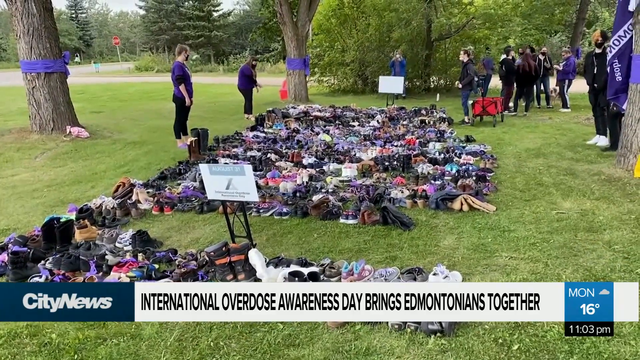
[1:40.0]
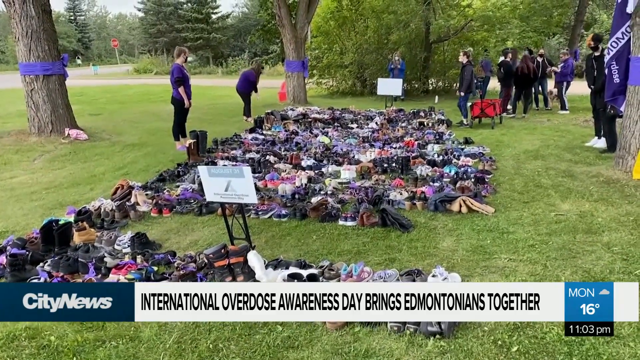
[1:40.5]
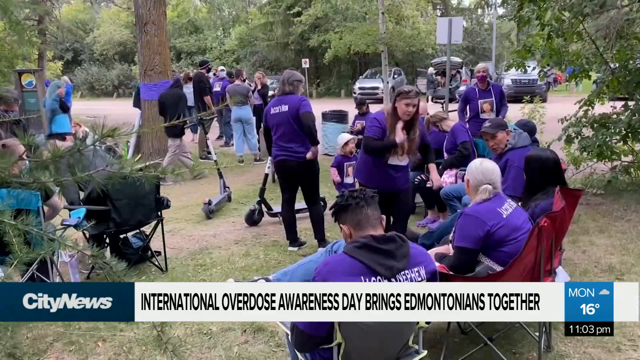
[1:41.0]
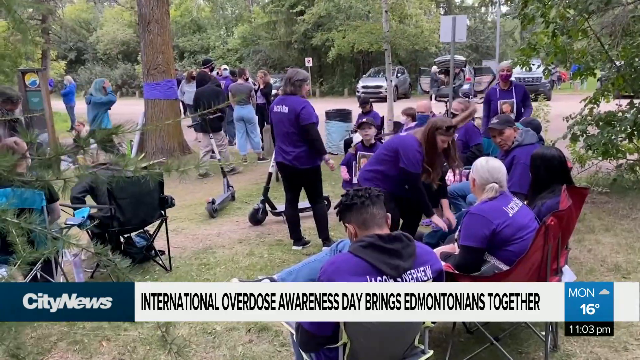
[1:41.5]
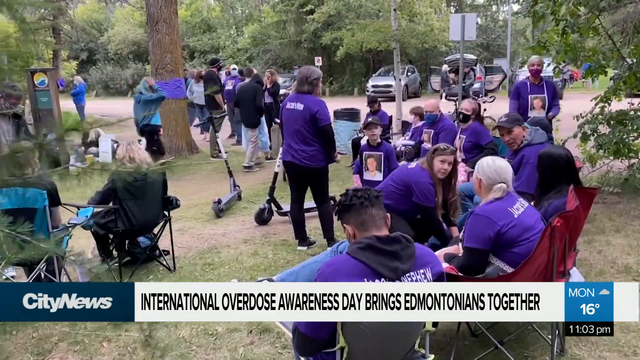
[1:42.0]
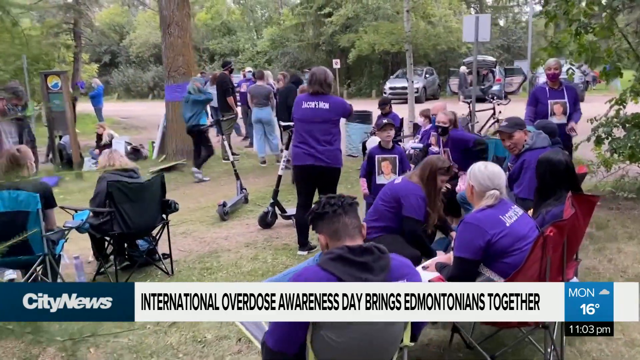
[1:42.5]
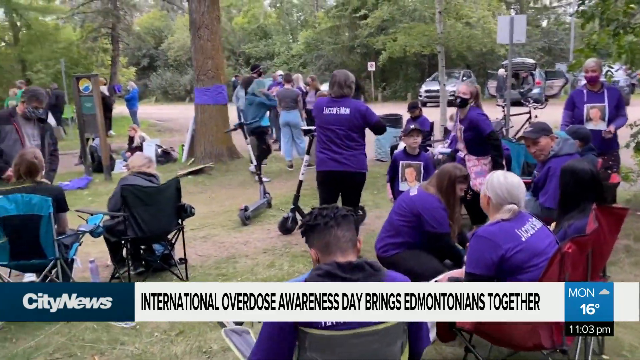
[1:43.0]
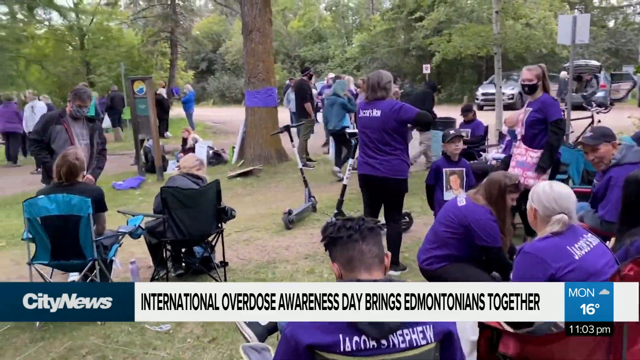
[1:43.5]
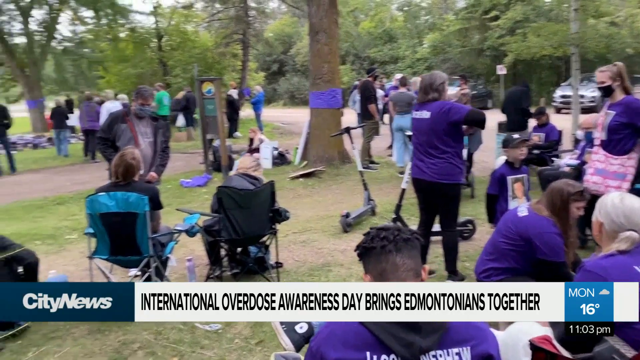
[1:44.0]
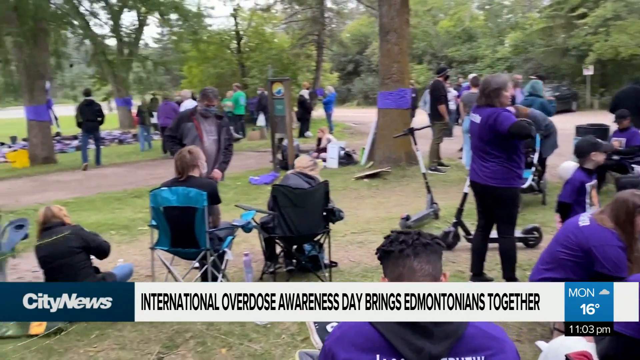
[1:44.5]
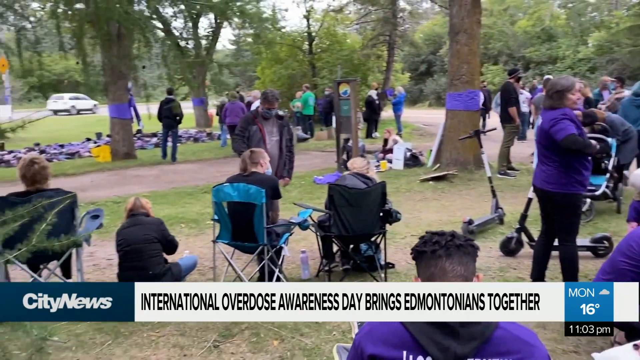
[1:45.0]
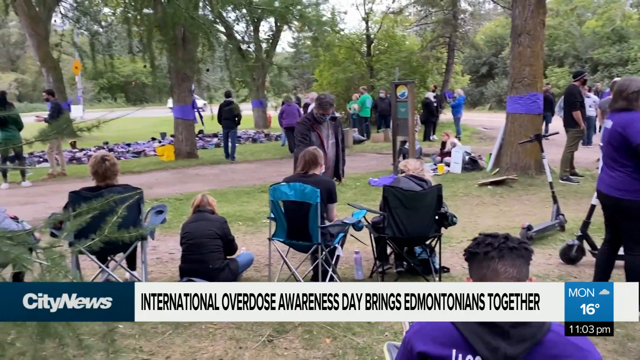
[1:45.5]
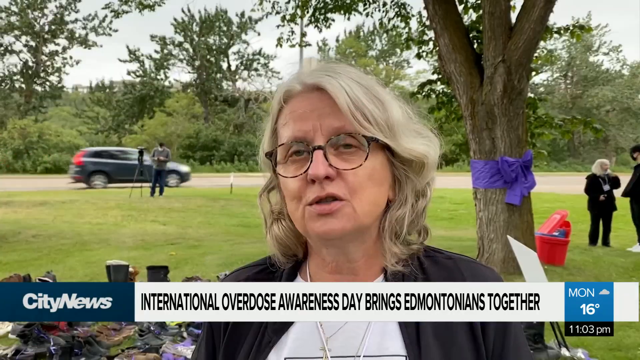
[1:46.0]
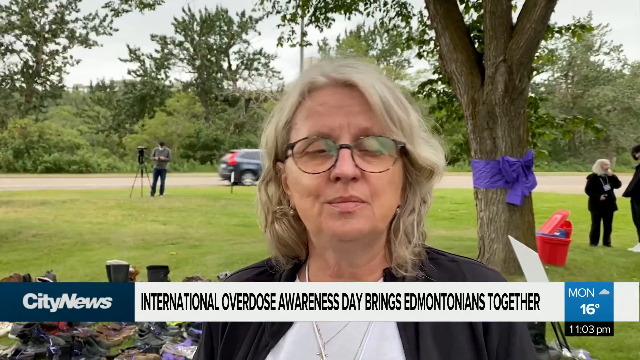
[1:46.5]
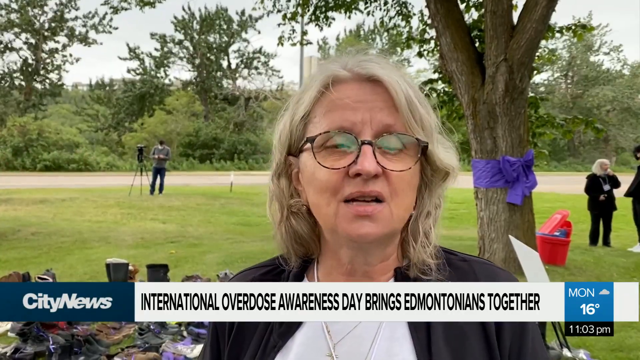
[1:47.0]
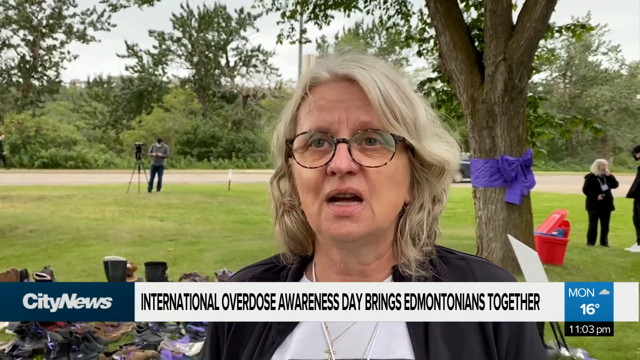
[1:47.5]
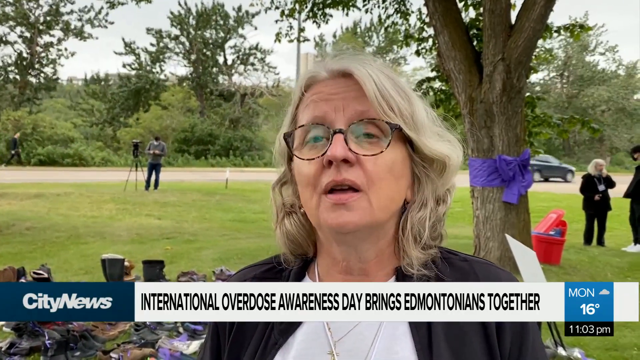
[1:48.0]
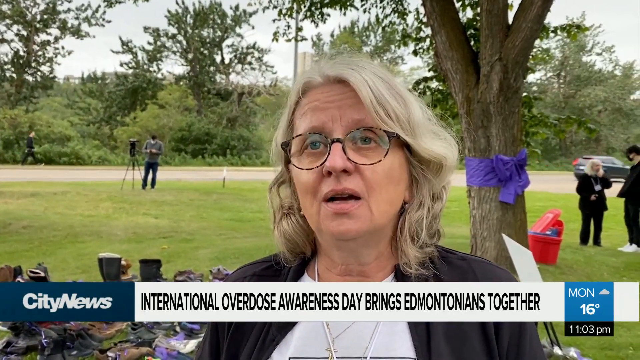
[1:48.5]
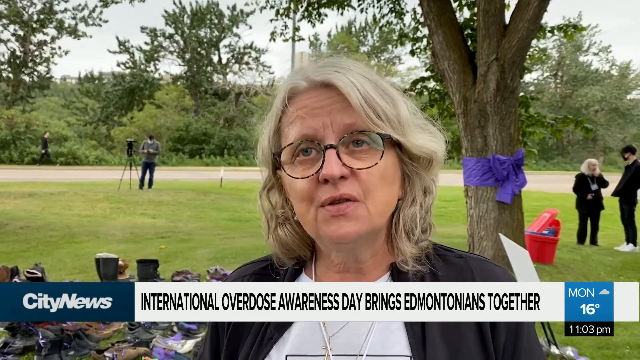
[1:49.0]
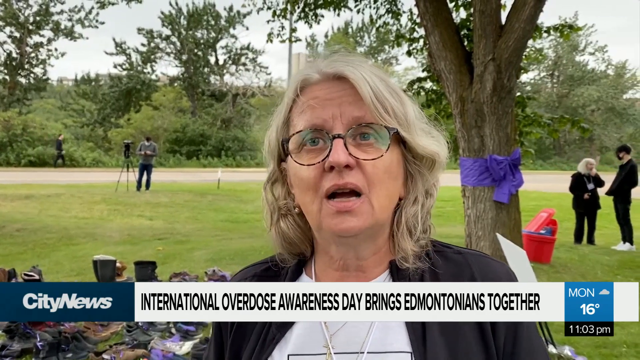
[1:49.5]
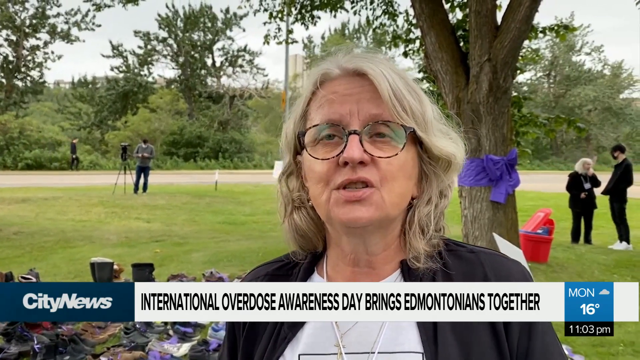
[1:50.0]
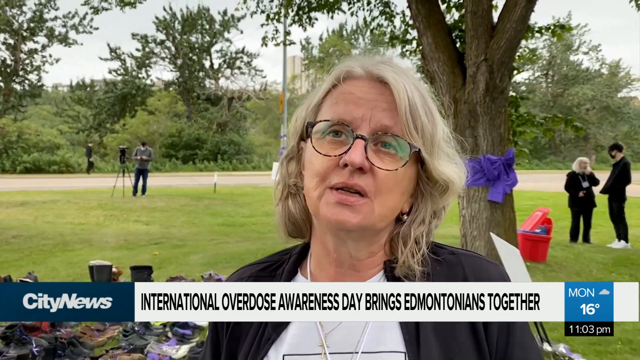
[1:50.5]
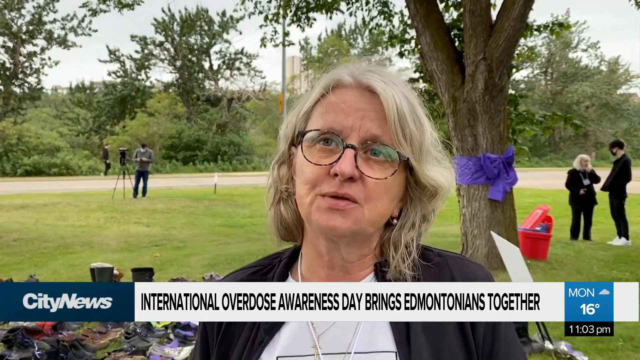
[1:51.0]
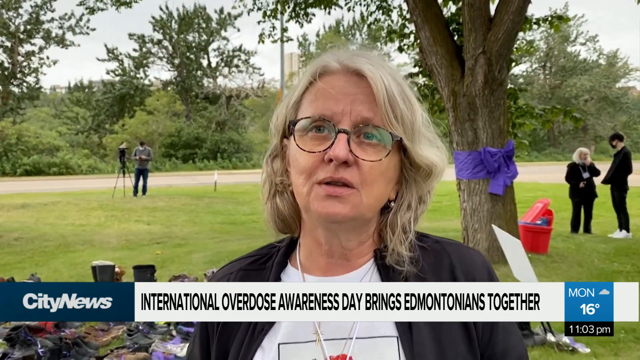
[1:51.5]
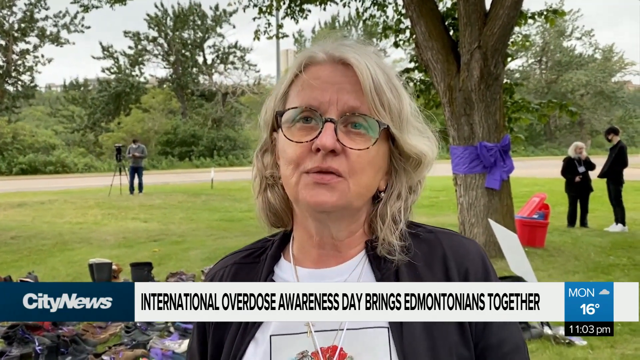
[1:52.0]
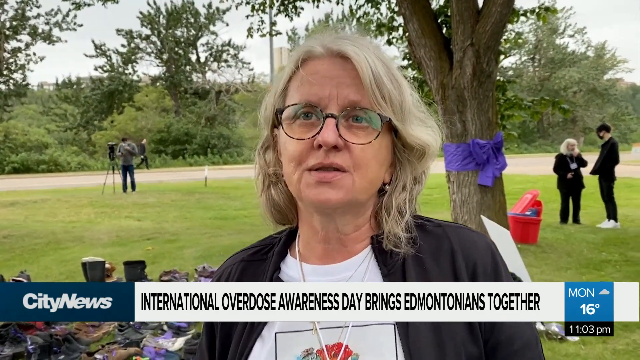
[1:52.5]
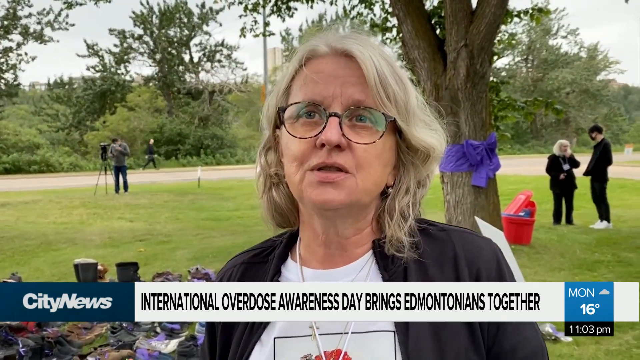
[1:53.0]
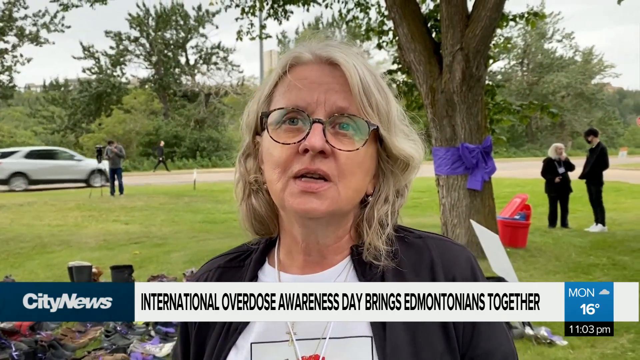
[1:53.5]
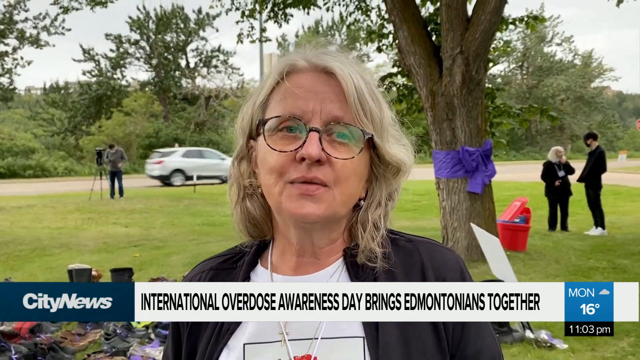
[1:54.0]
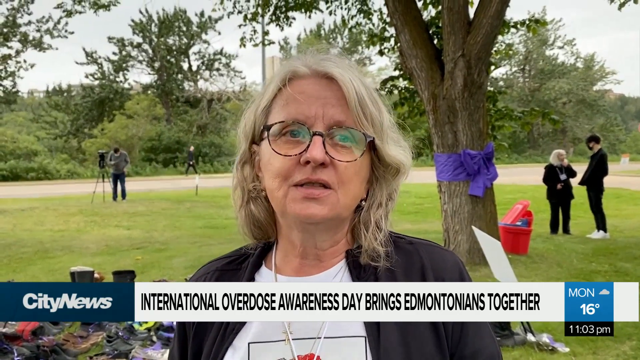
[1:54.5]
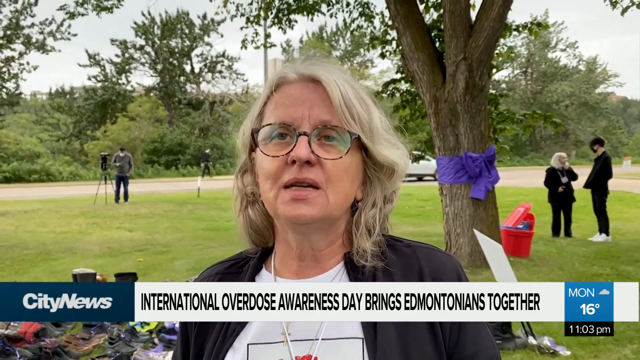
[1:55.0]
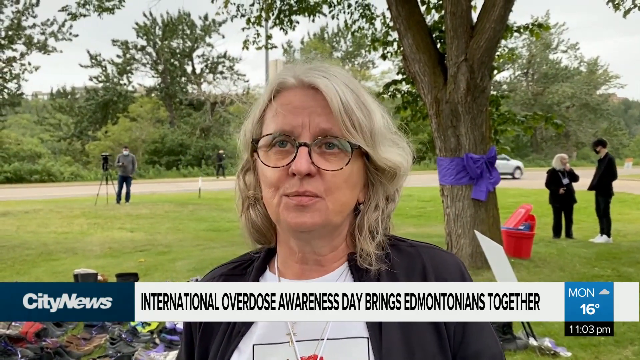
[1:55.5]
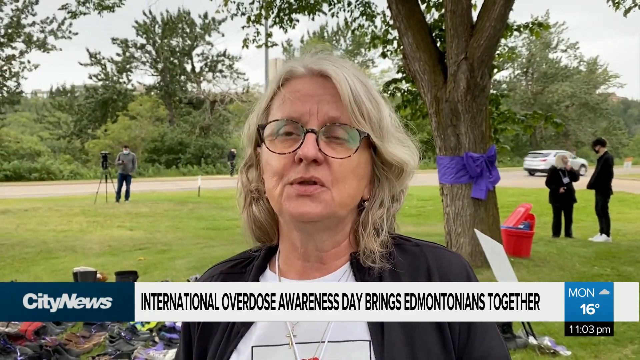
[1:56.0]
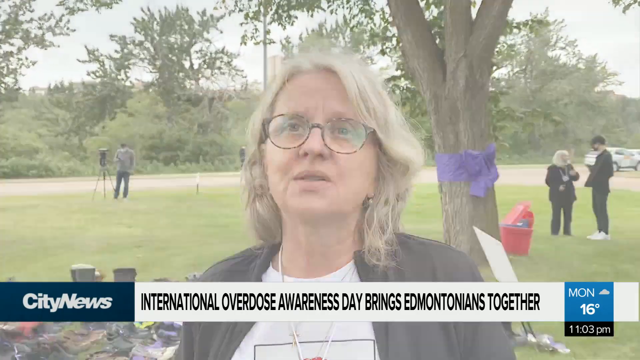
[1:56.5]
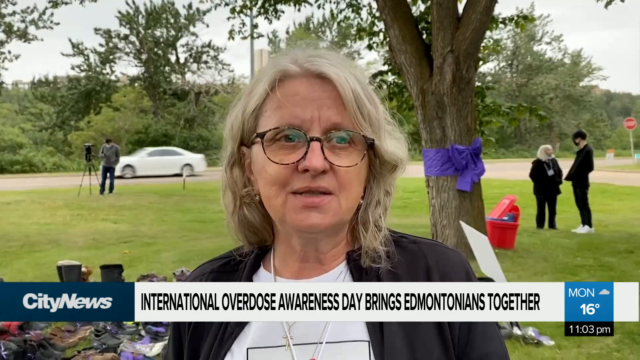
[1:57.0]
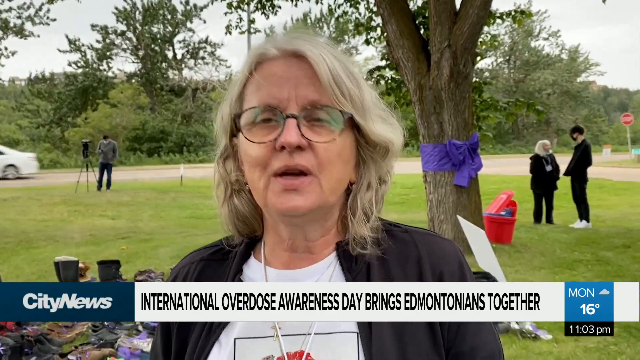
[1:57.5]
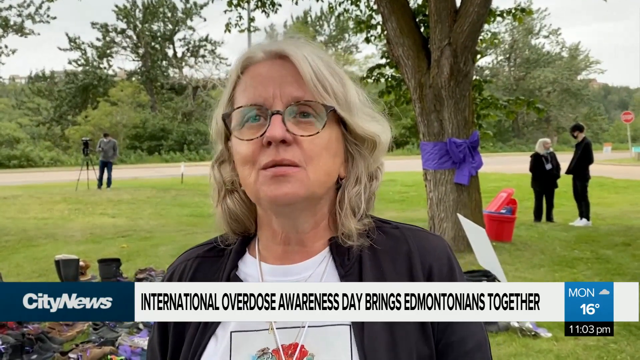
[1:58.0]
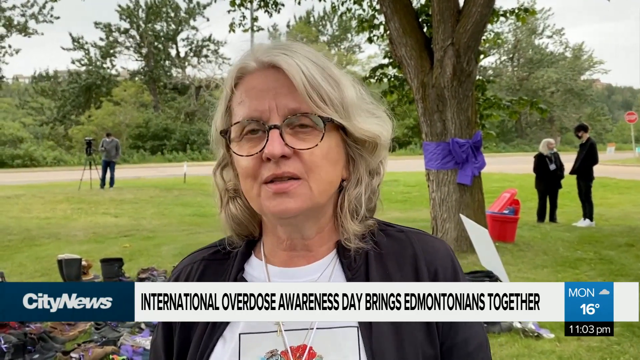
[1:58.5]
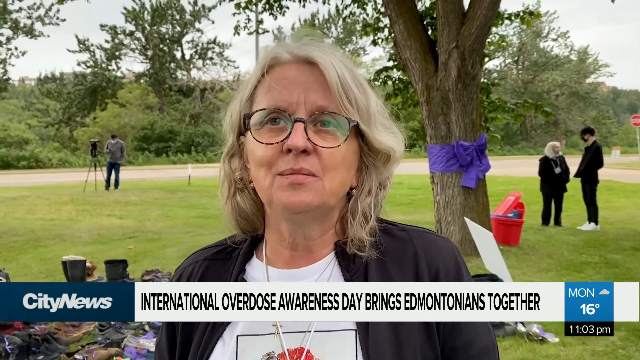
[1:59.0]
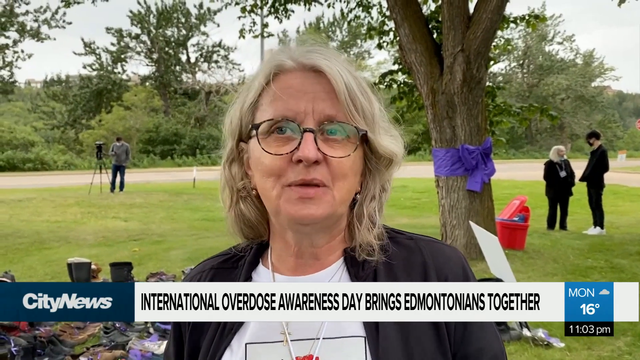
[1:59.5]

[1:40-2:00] Many people are in a uniform of purple t-shirts; not all of them, but most wear purple t-shirts. Some of them are sitting down, and there are some electric scooters. Later a woman talks on camera, wearing sunglasses, a black jacket, a white t-shirt and a necklace. In the background, some people are standing, a cameraman with a tripod camera stand is standing next to the road, and a purple cloth is tied on the tree just behind where the woman is talking. Below the screen is City News with the headline "International Overdose Awareness Day brings Edmontonians together," and on the right side the day, Monday, 16°C, and the time, 11:03 p.m.